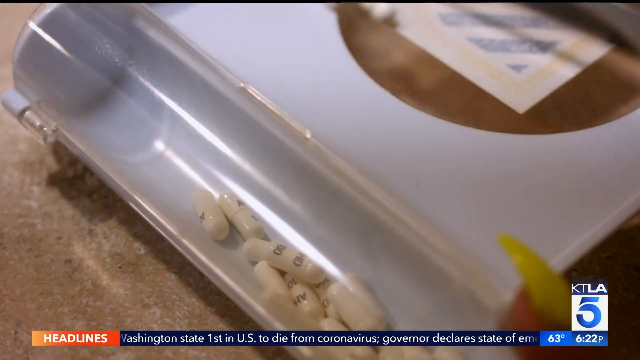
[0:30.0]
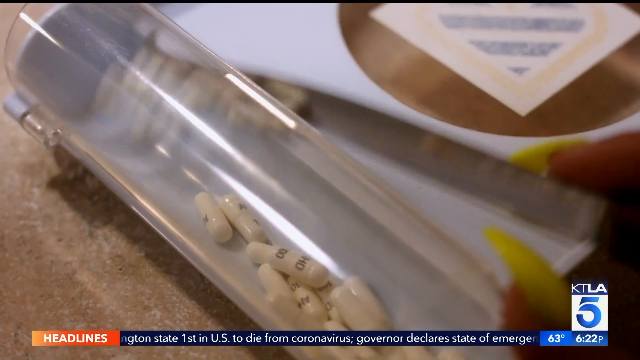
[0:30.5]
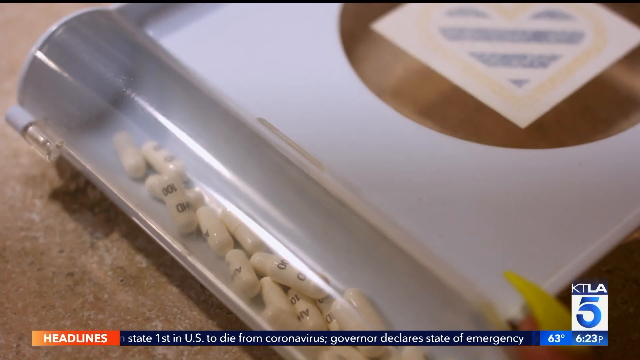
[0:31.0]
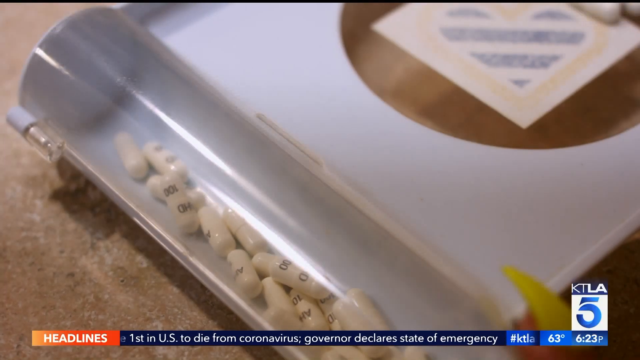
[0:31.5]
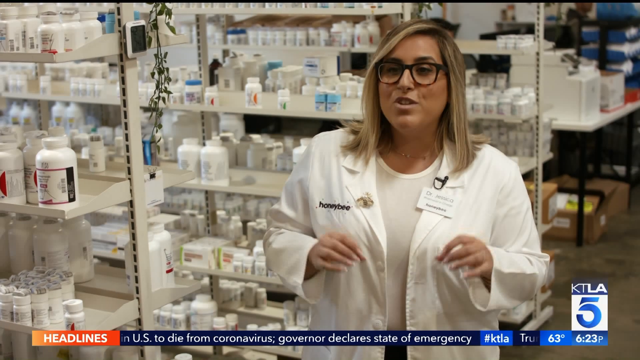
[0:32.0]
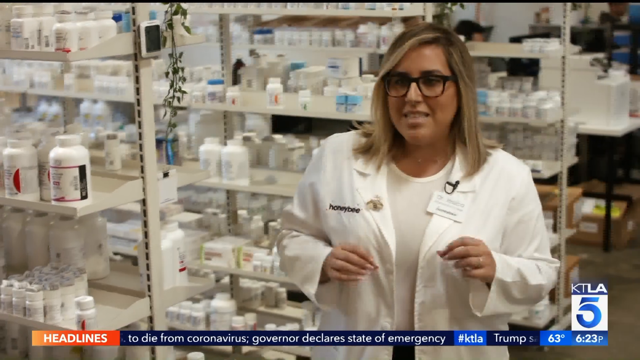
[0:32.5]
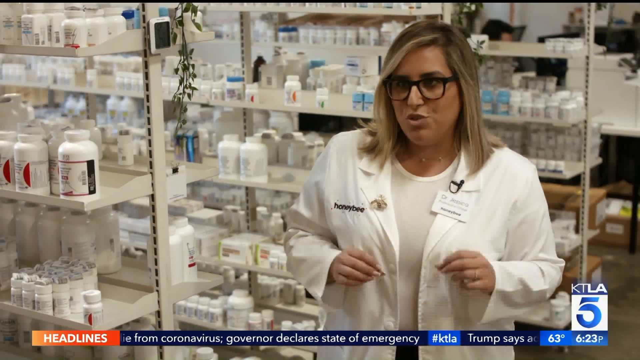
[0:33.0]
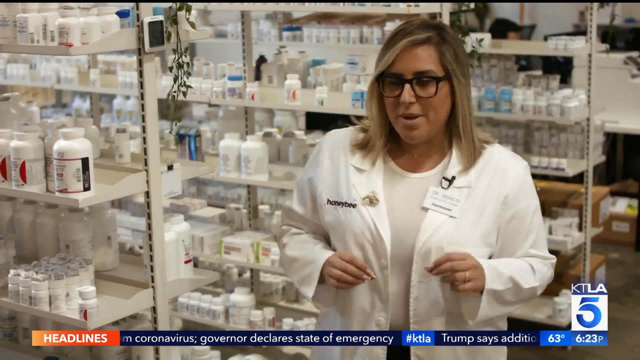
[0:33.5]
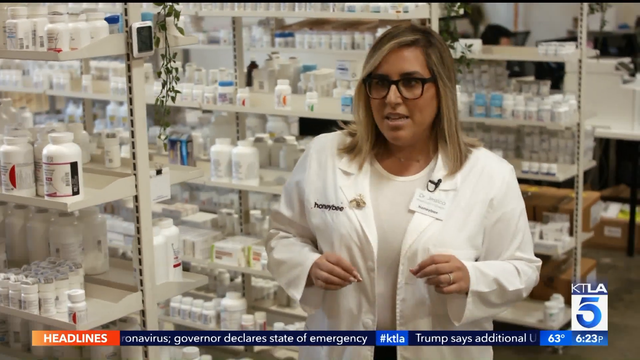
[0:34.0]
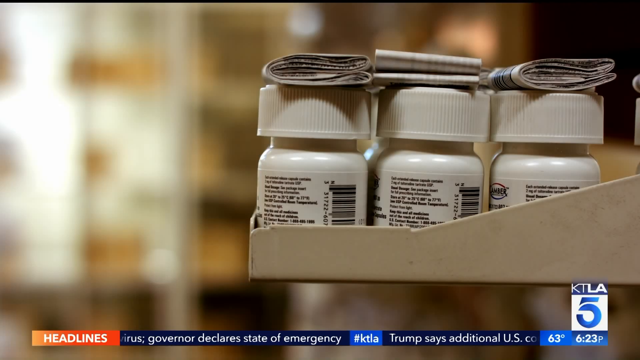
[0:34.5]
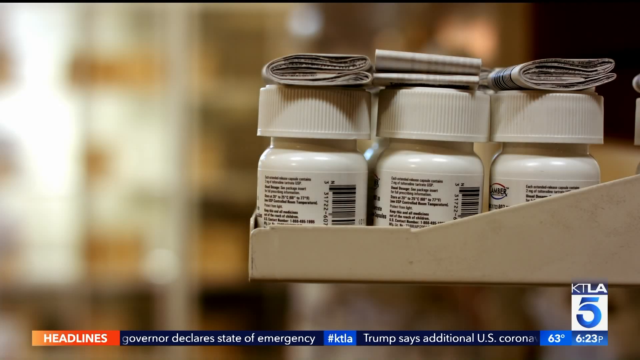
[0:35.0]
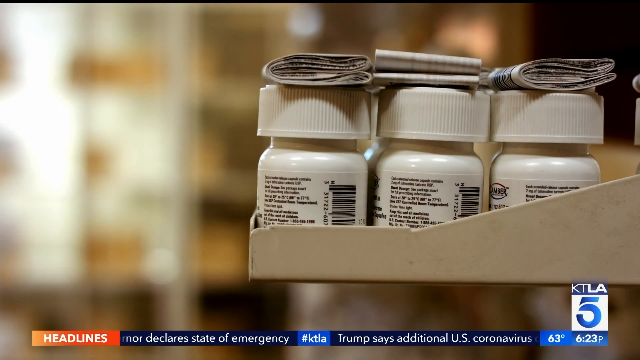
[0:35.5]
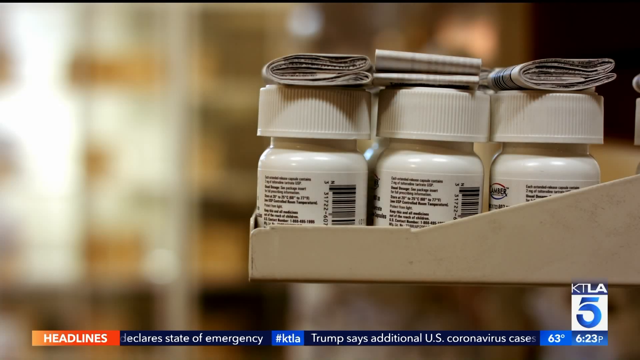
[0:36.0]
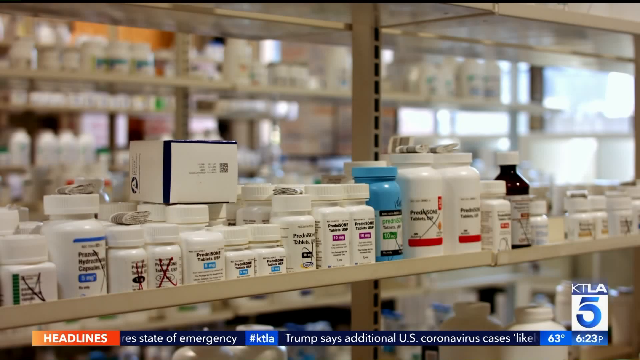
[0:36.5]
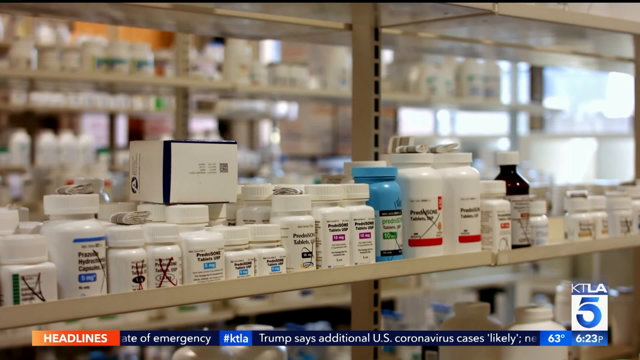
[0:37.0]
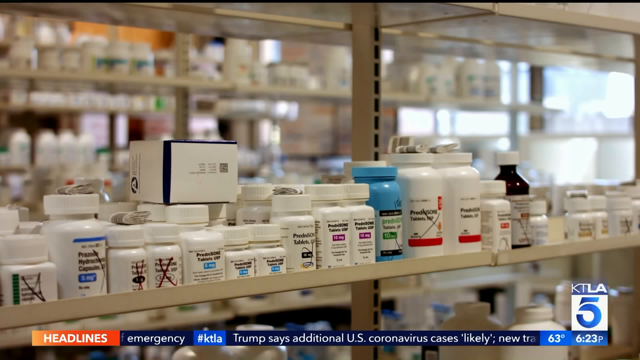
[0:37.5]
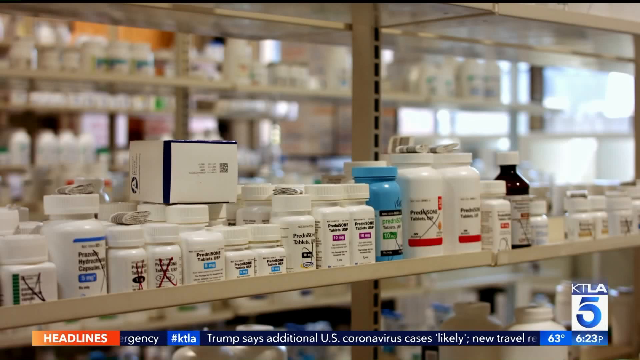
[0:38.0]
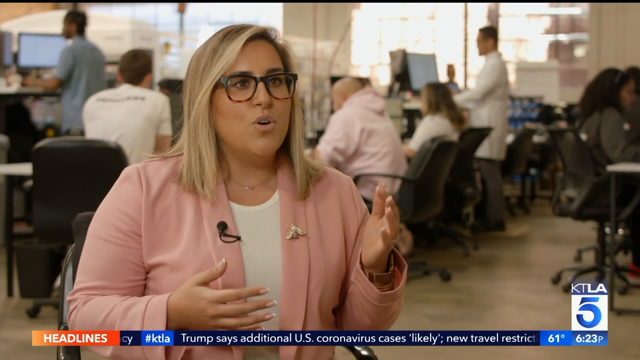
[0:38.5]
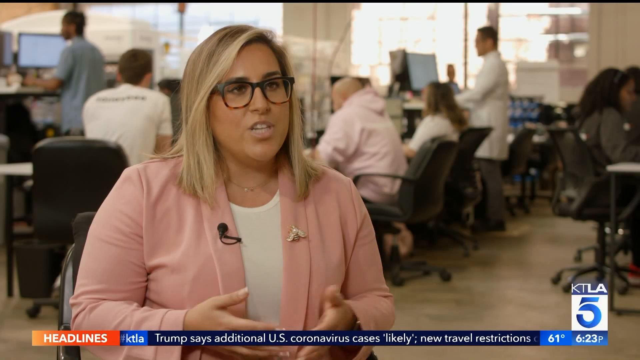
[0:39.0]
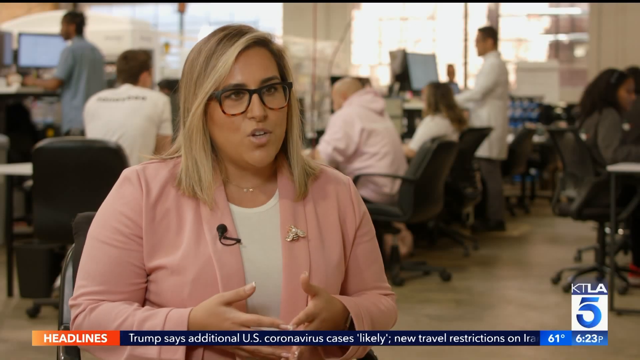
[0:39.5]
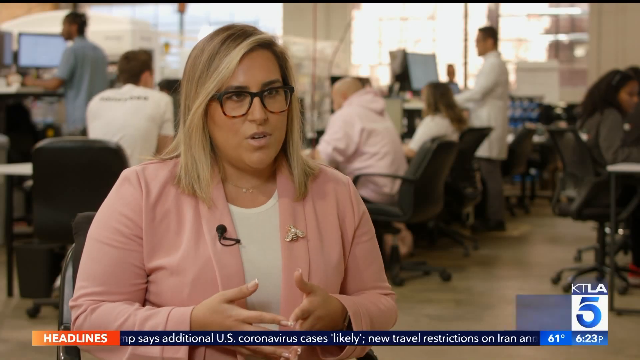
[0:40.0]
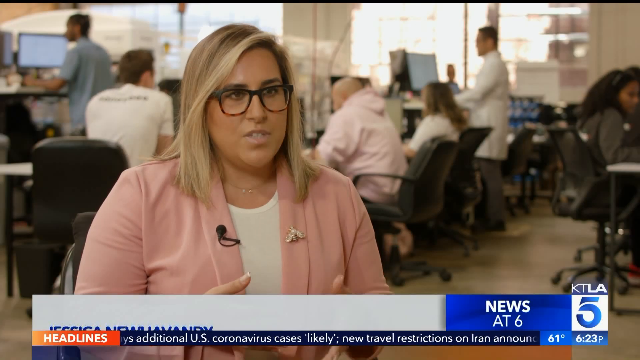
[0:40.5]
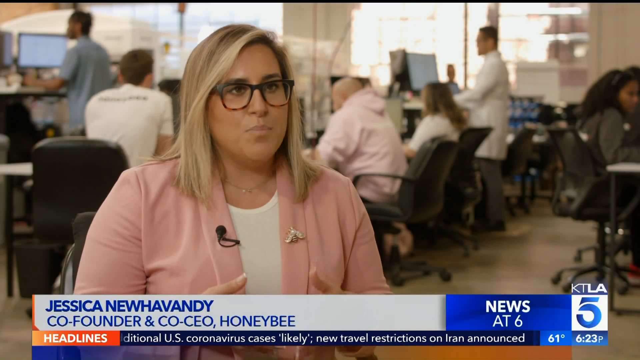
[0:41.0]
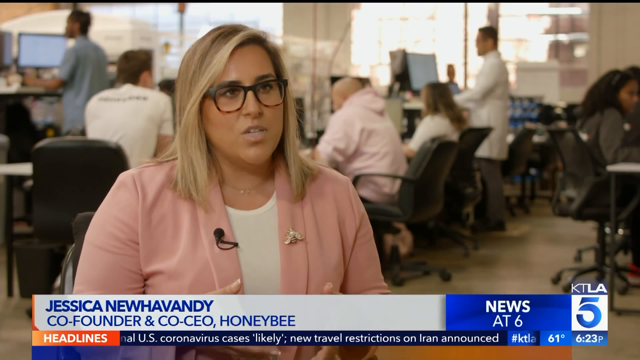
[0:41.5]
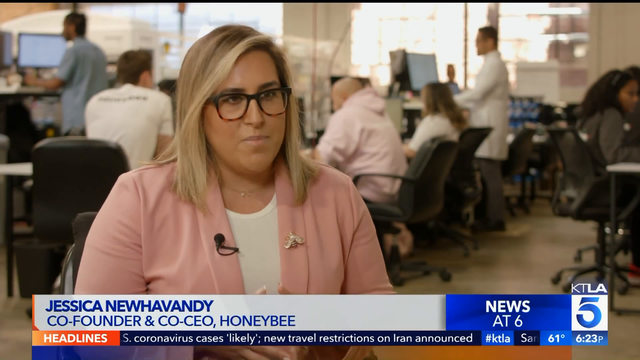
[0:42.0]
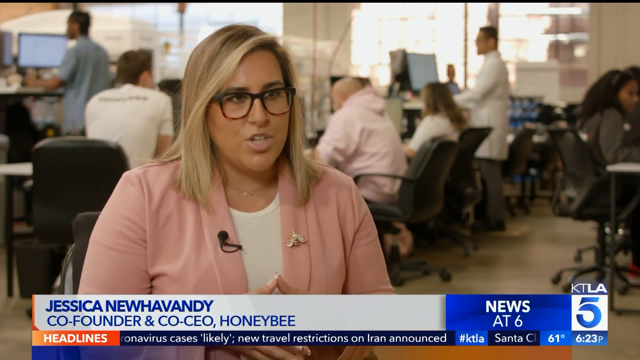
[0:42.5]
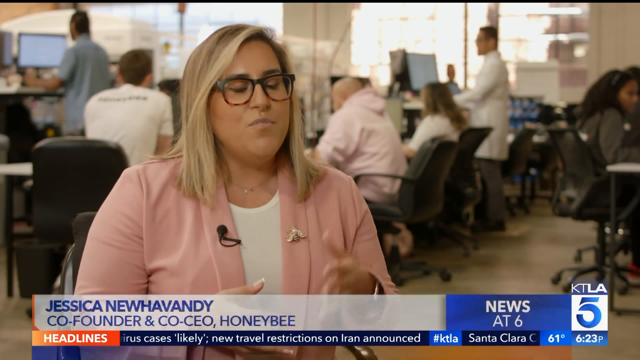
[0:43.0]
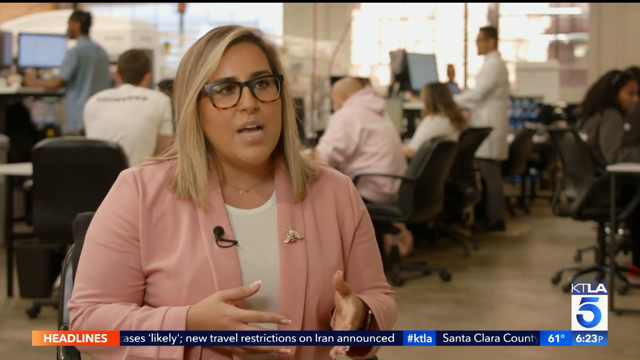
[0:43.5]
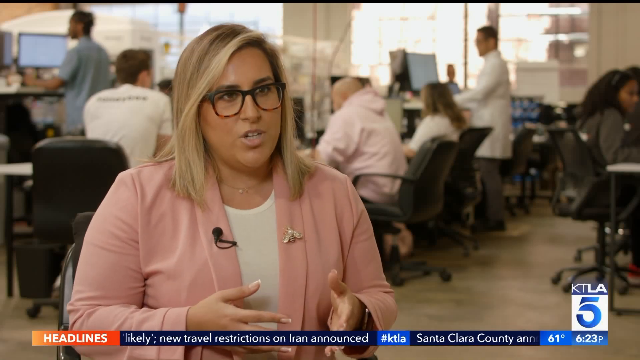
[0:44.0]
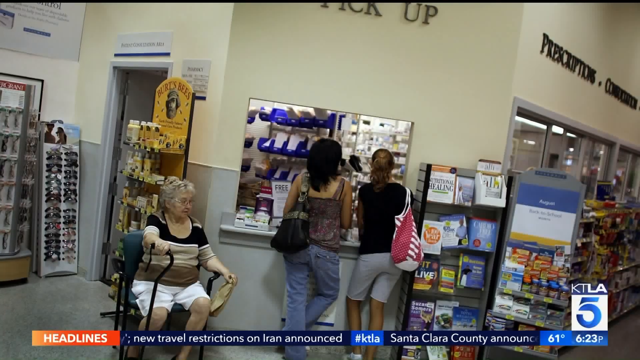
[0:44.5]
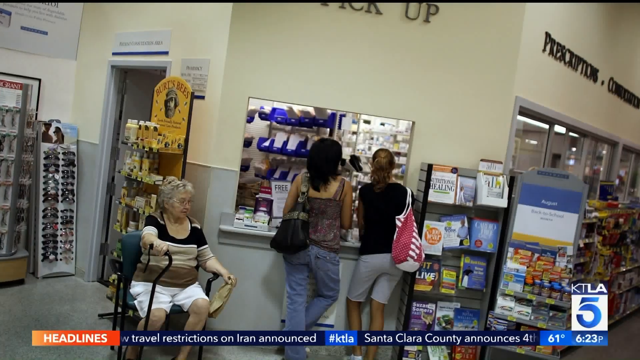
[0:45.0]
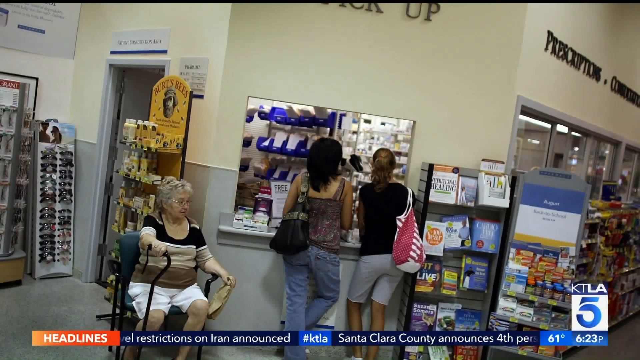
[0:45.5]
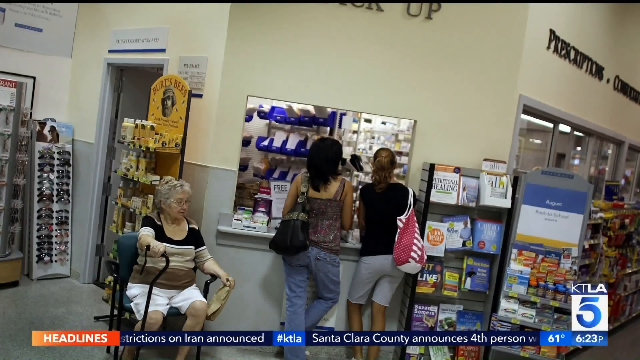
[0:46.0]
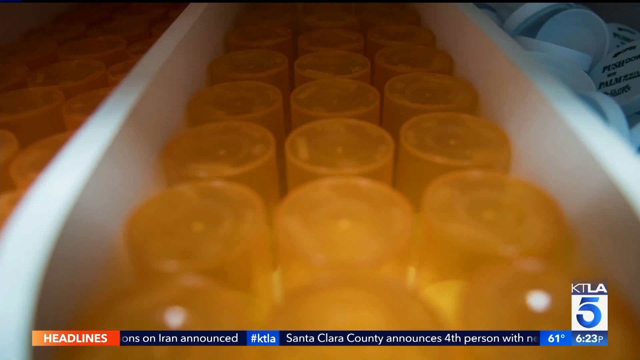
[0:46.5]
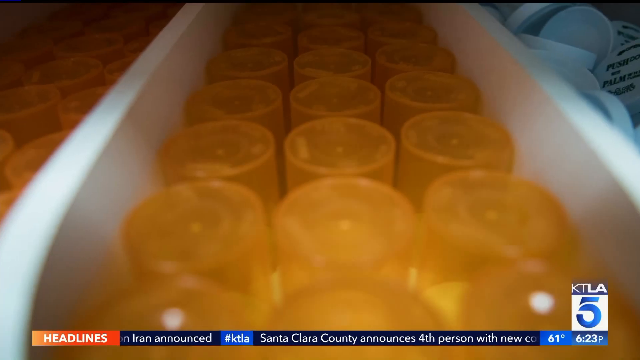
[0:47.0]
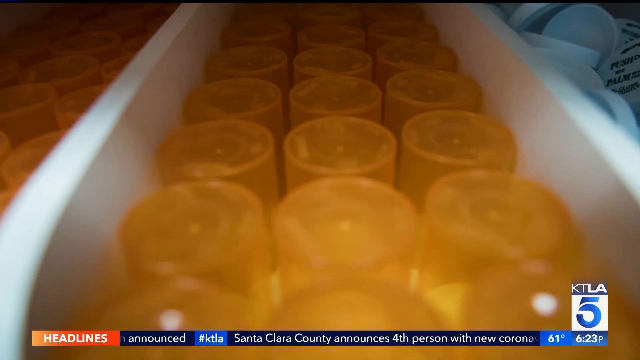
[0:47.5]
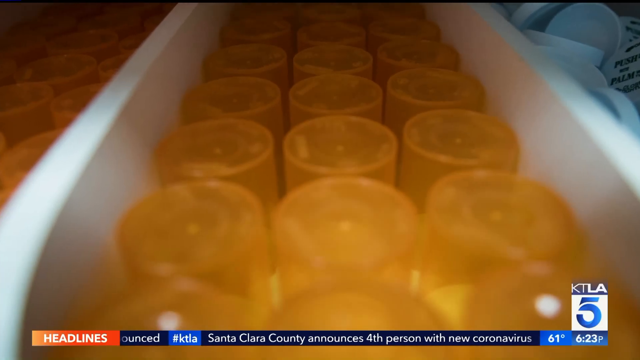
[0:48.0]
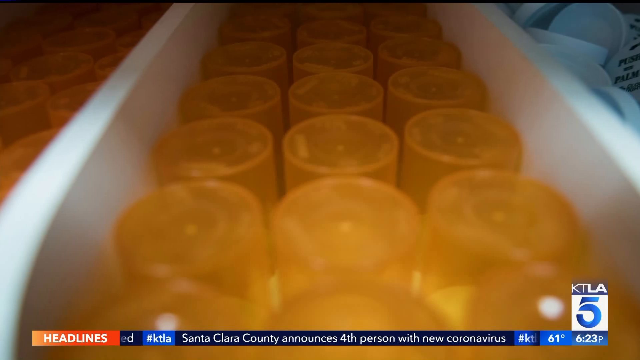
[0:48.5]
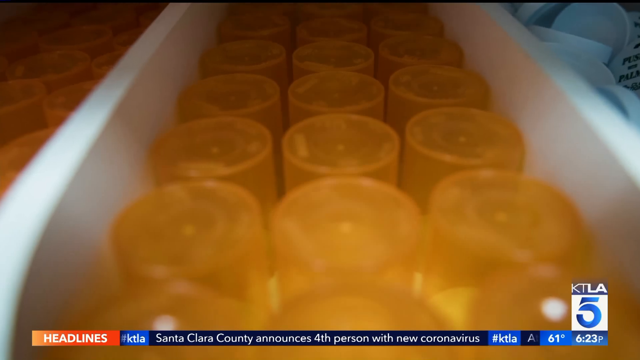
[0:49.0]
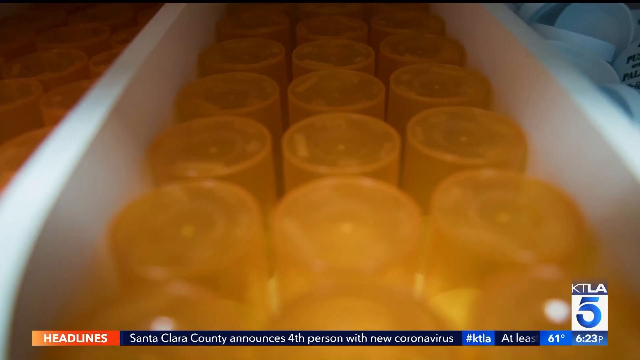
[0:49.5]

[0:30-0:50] Pills are slid into a cylindrical container, followed by many white pill bottles on a shelf, with a box lying on its side on top of two of the bottles. The woman in the pink blazer appears again, with a white undershirt, large-framed glasses and shoulder-length blonde hair, sitting in the middle of a call-center-type space. Behind her, people on swiveling computer chairs each focus on one or two computer screens. She talks with her hands, held split open in front of her and moving up and down. A bee pin is on one side of her collar and a microphone is pinned to the other side. More pharmacy images follow: two women standing in front of a pharmacy window to pick up prescriptions, and a number of empty bottles lying upside down inside a storage container. Her name, Jessica, appears briefly at the bottom of the screen; she is the CEO and founder of Honey Bee, a pharmacy-type online business.